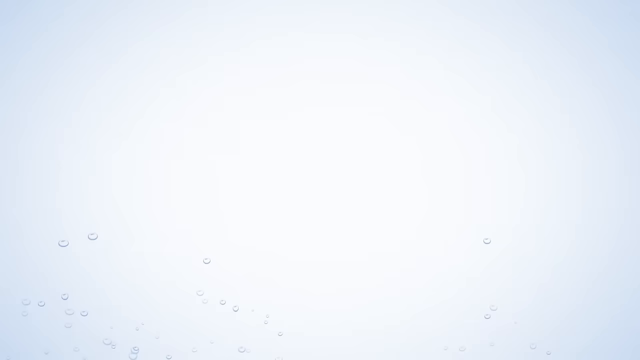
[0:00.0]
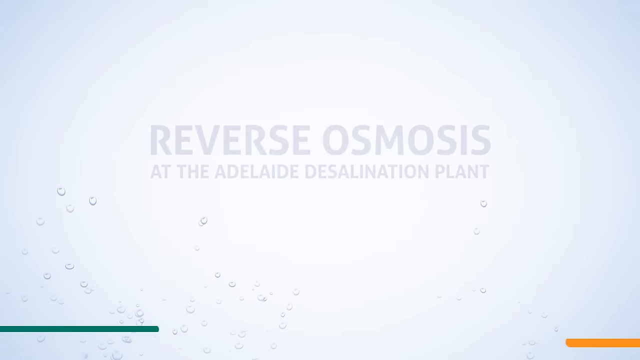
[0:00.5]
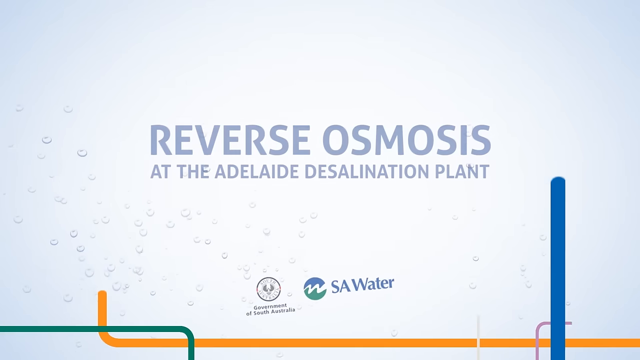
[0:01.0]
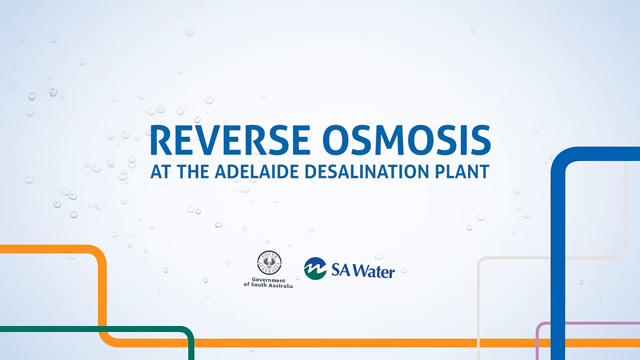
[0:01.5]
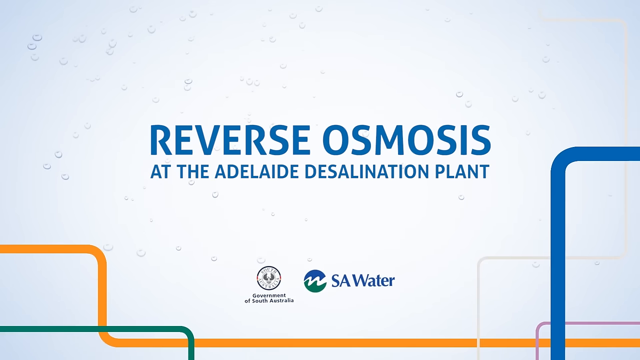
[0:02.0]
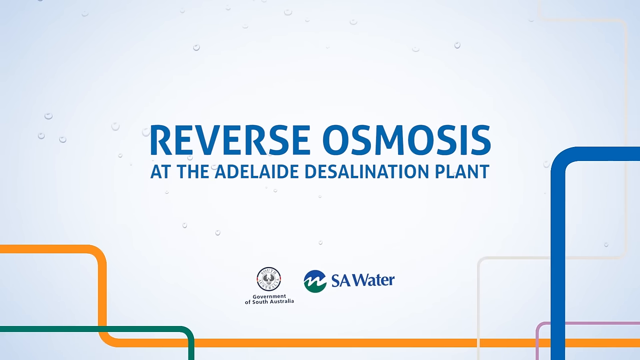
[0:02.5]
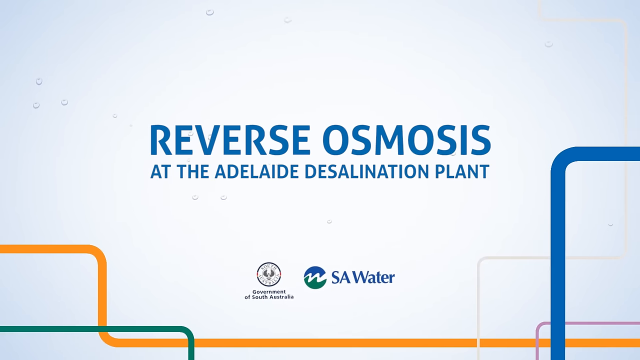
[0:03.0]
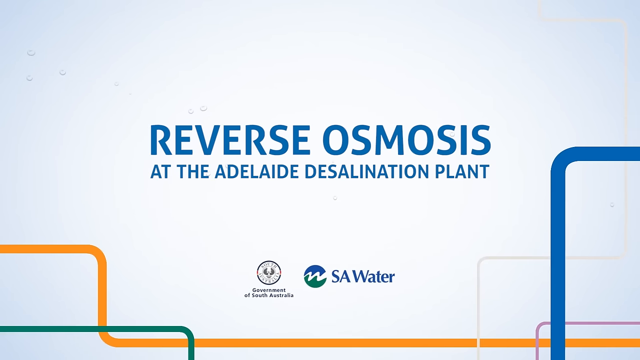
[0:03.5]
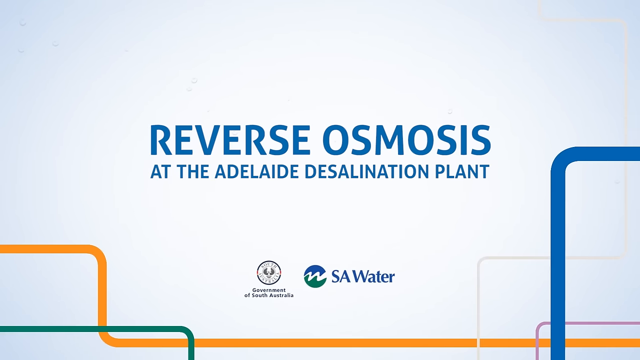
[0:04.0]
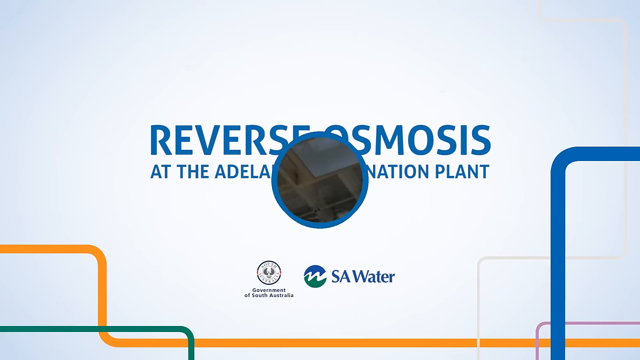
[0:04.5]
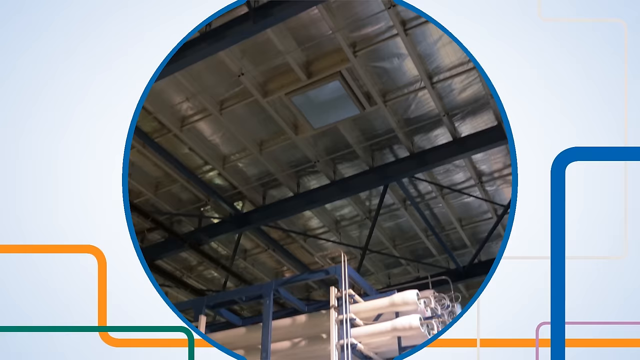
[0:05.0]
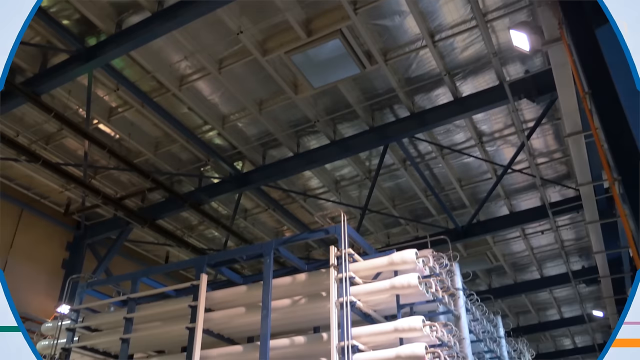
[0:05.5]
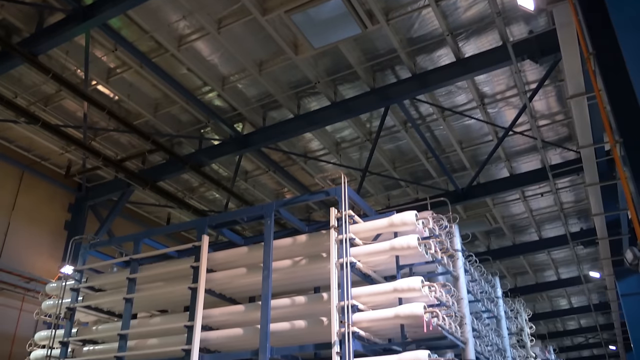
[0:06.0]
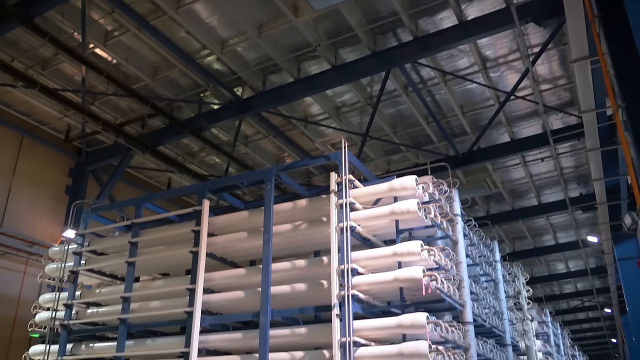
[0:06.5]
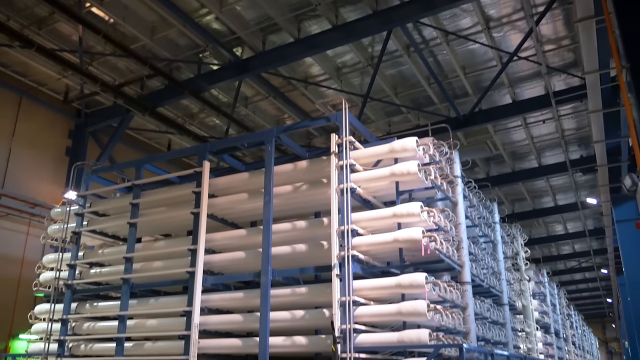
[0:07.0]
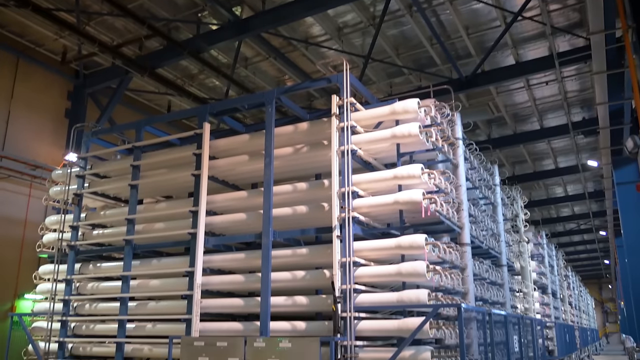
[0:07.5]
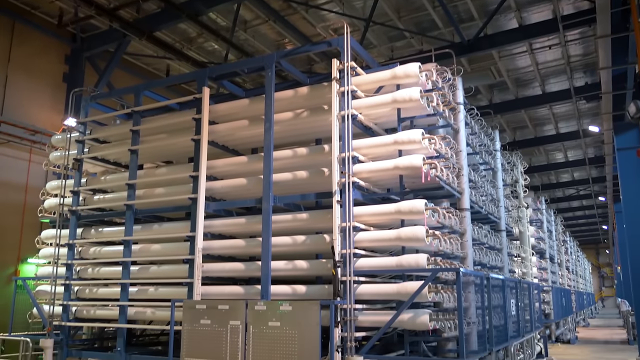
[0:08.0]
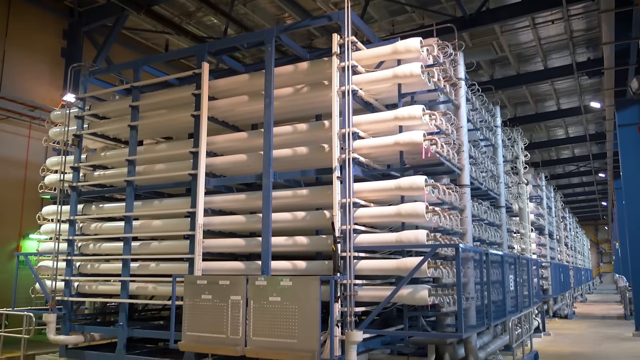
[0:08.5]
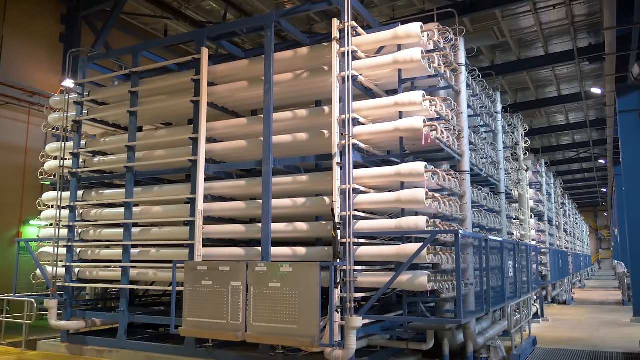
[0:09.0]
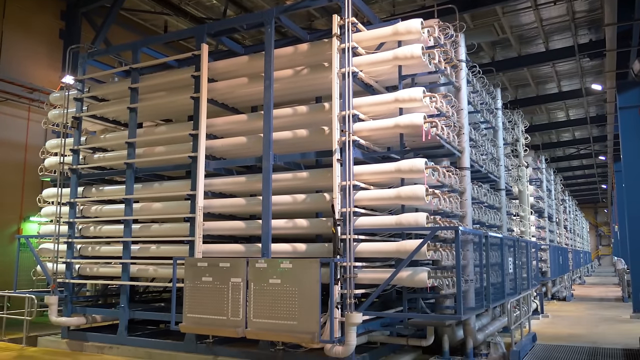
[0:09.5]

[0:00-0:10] An introduction slide opens the video, showing large blue text reading "Reverse Osmosis at the Adelaide Desalination Plant" on a white background. At the bottom middle are two company logos; the one on the right has the words "SA water" beside it. The slide stays up until, toward the middle of the shot, a circle comes in from the middle and expands all the way outward, transitioning to video of the inside of the desalination facility. The building is extremely tall and large, with a gray metal roof. In the middle of the floor is a large structure made up of many white pipes lined up on top of one another; the front row closest to the camera has nine pipes. Long, large blue metal beams around the white pipes hold the structure together.